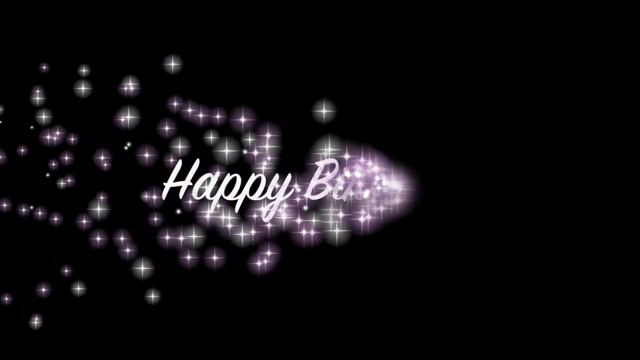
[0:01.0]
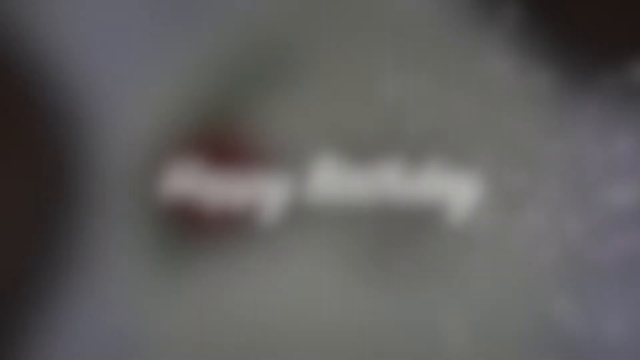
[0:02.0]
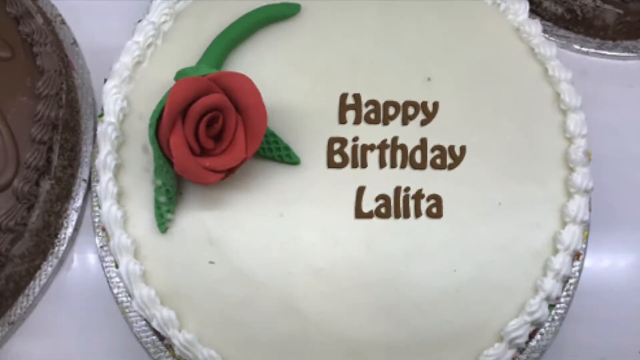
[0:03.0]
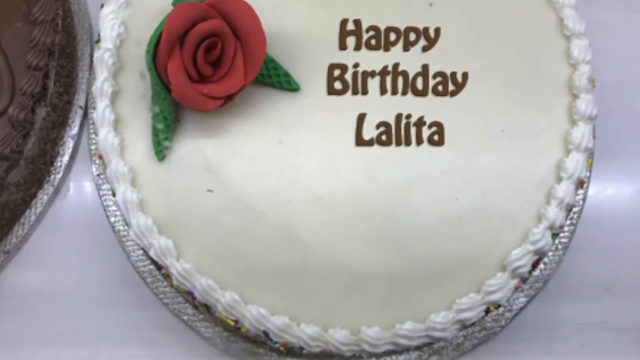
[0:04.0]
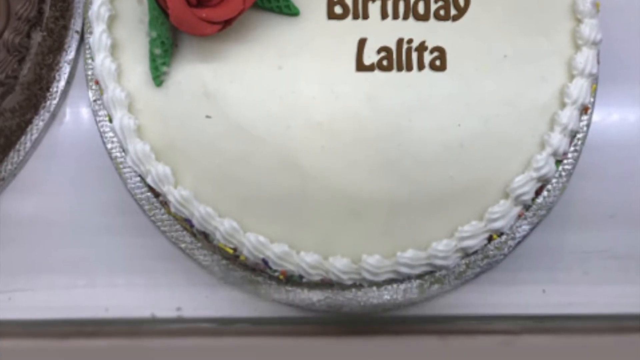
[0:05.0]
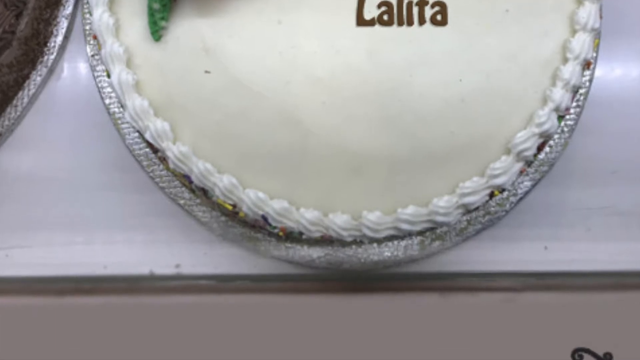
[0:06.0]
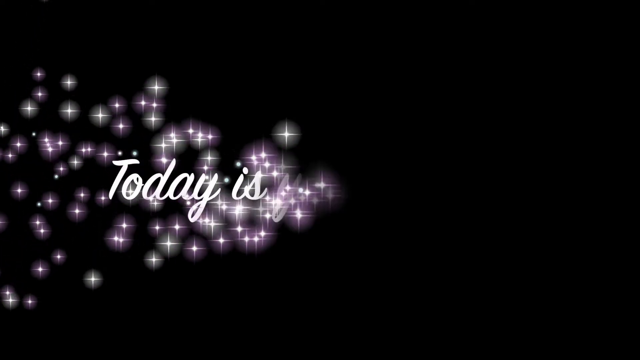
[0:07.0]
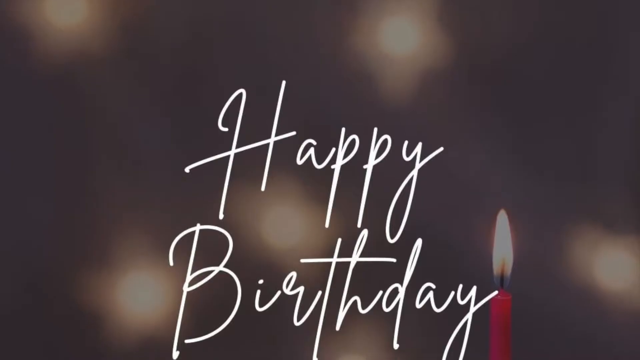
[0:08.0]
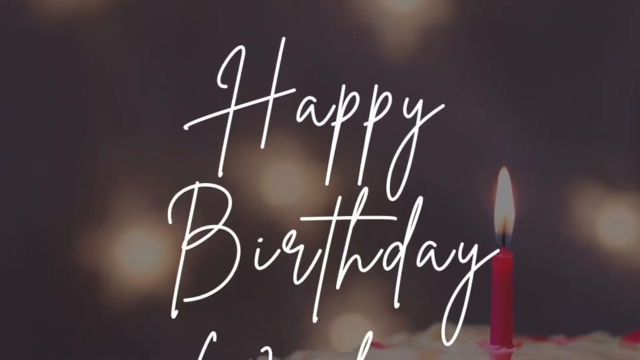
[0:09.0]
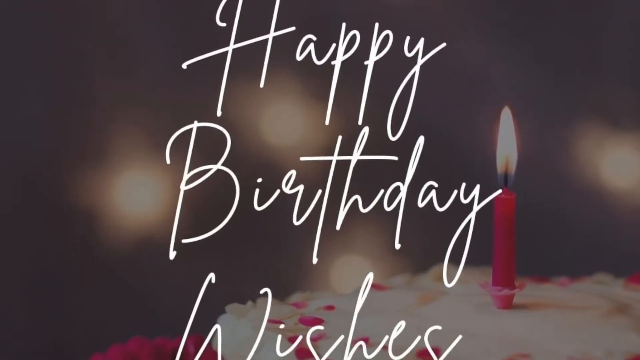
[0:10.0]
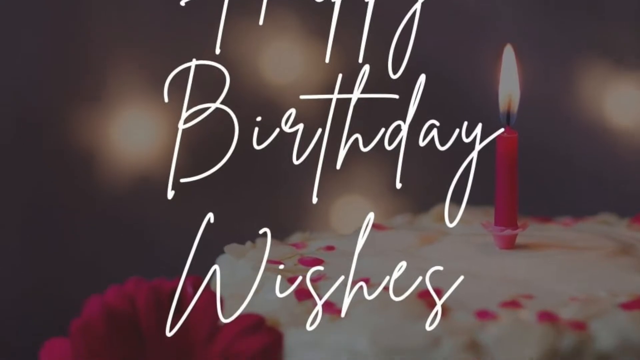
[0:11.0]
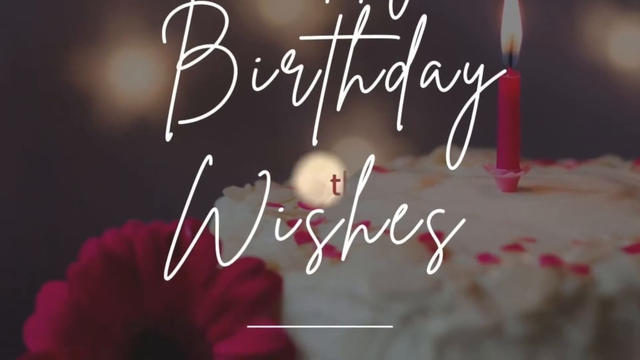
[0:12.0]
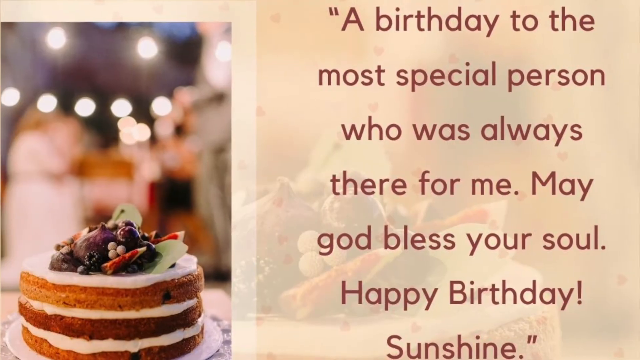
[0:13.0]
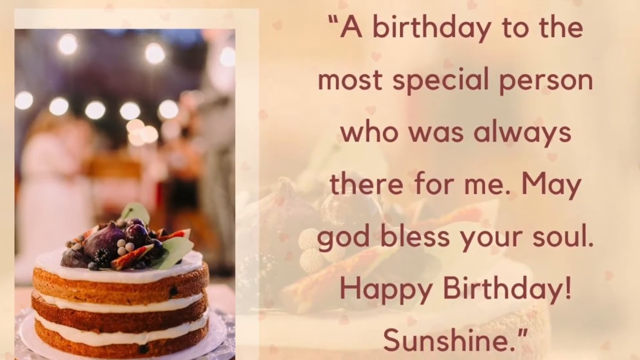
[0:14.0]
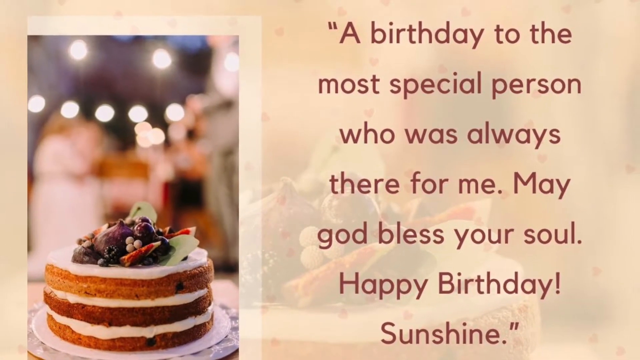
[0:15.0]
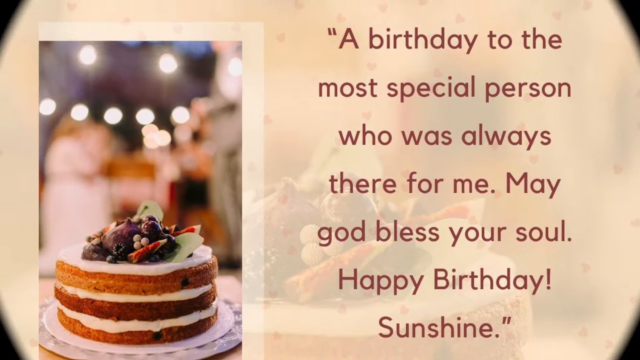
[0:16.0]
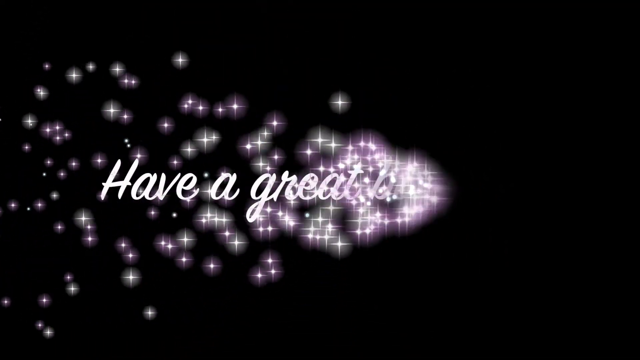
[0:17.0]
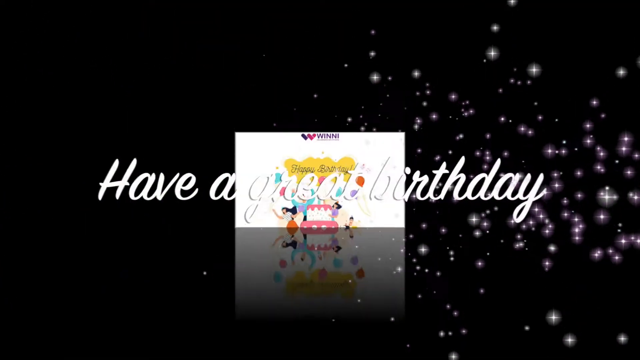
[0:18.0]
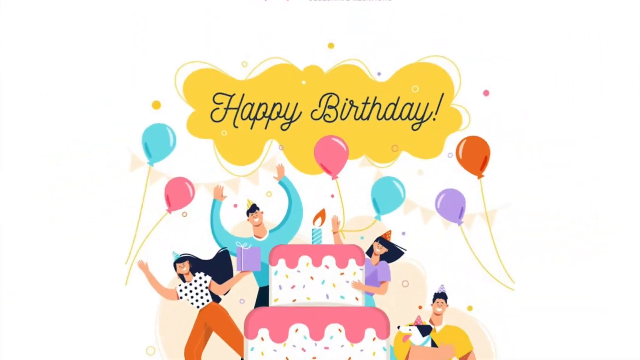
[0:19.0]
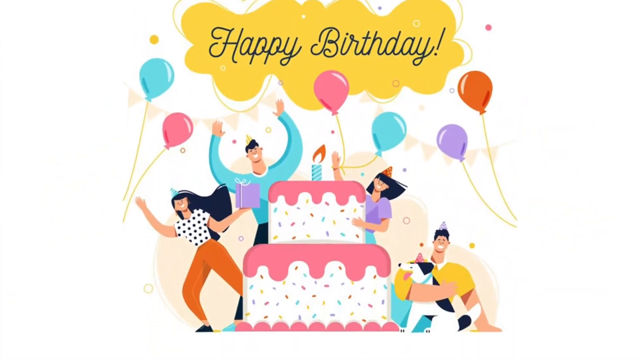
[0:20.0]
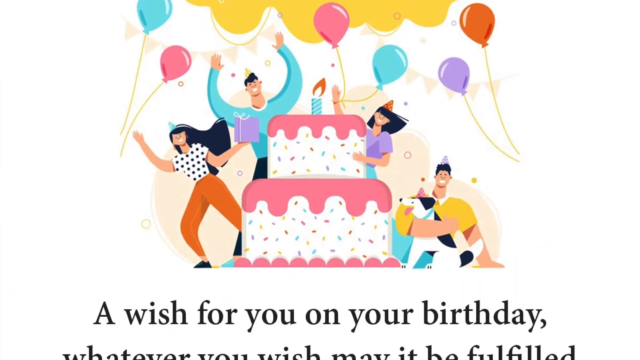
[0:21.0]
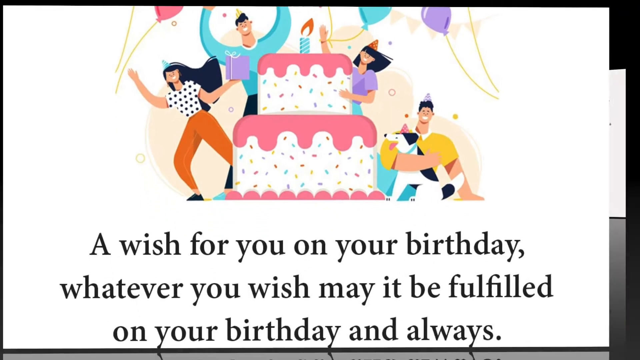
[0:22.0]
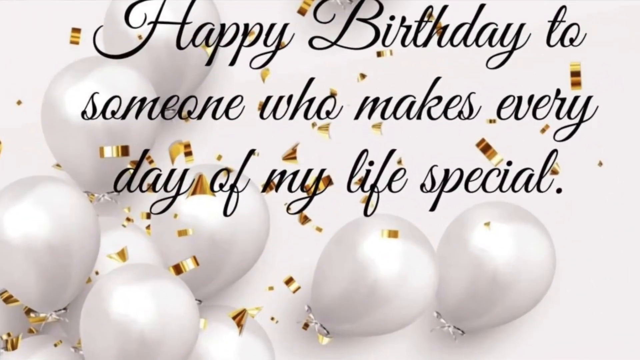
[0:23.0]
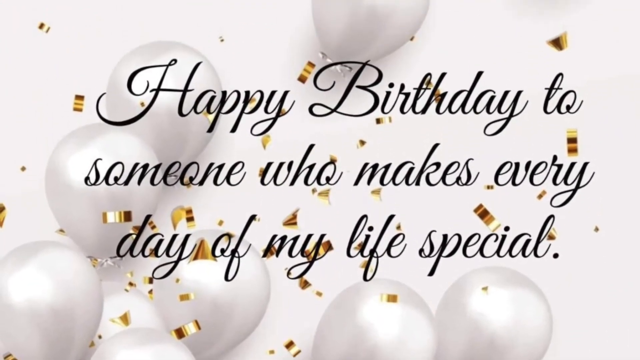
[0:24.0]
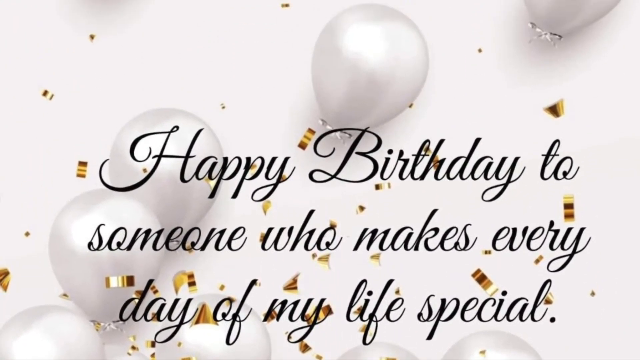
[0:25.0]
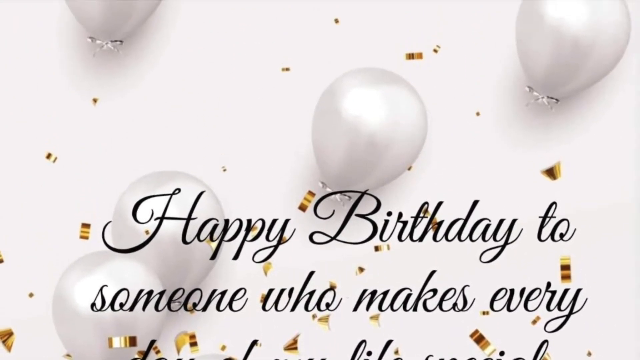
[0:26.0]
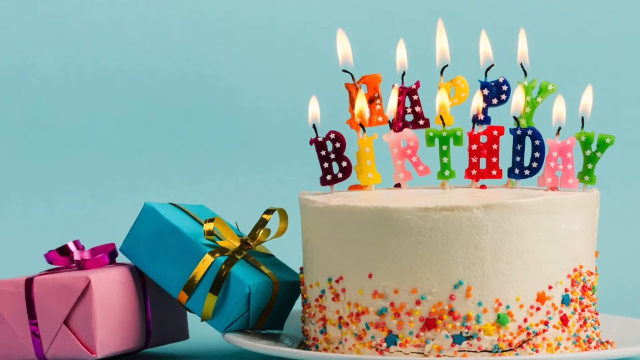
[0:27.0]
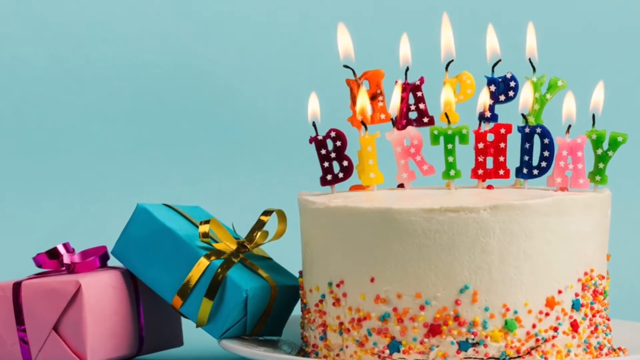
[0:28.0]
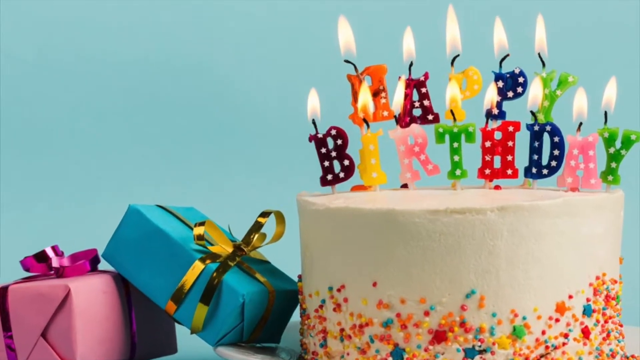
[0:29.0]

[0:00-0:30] The video opens on a graphic effect of small, white, sparkly stars moving from the left of the screen to the right, leaving behind the text "Happy birthday" in a festive italicized font. The picture dissolves to a white frosted cake with a rose with a green stem on it, with "Happy birthday, Lolita" piped and frosted onto the cake in brown. The end of the cake slides up the screen in a pan. The sparkly effect then leaves behind more italicized, cursive-style text that says "Today's your birthday," and the video immediately cuts to another image that says "Happy birthday wishes" in thin white handwriting-style text over a grayed-out picture of a birthday cake with a single lit candle; the cake is white with a red flower, and the pink candle is on fire. Another cut leads to a picture of a card with a different cake in the left part of the frame and, on the right, brown text over a pink background reading "A birthday to the most special person who was always there for me. May God bless your soul. Happy birthday." The card addresses the person as "sunshine." The sparkly effect returns with the text "Have a great birthday," then the video cuts to another picture of a card: a stylized image of a birthday party with a family around a cake.